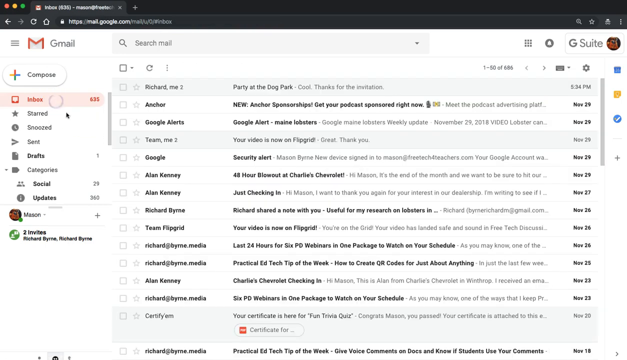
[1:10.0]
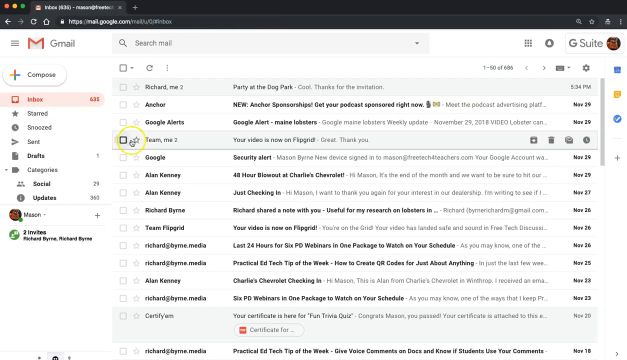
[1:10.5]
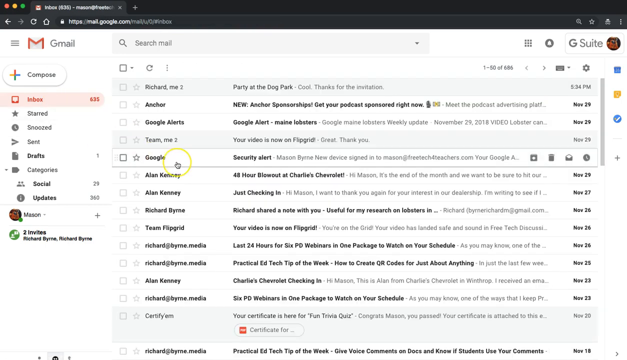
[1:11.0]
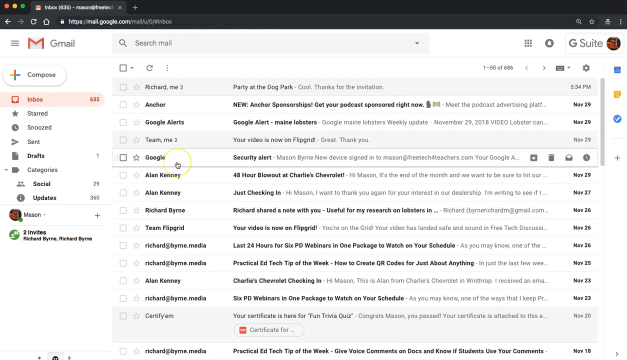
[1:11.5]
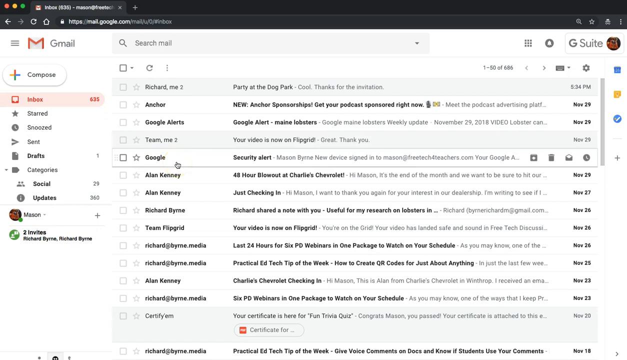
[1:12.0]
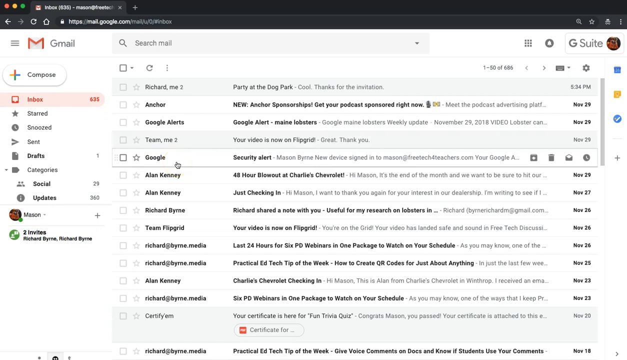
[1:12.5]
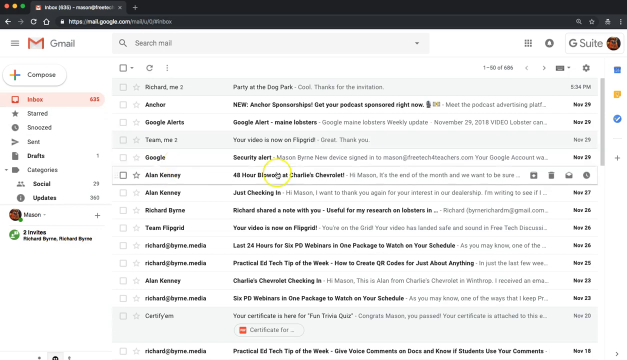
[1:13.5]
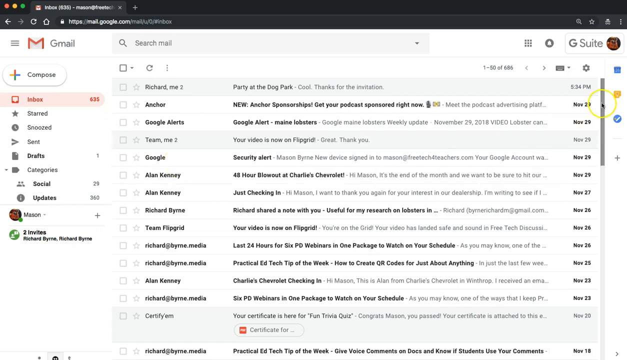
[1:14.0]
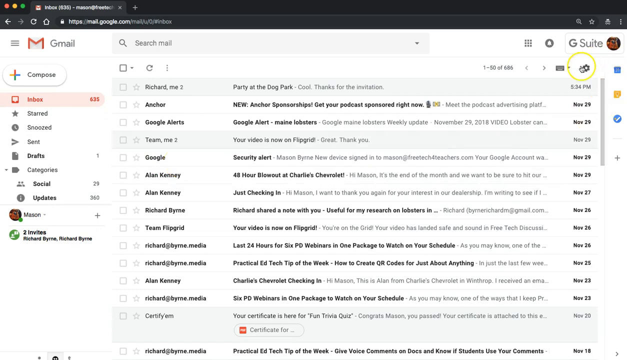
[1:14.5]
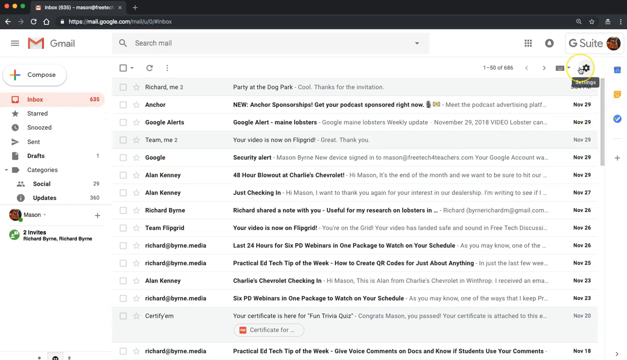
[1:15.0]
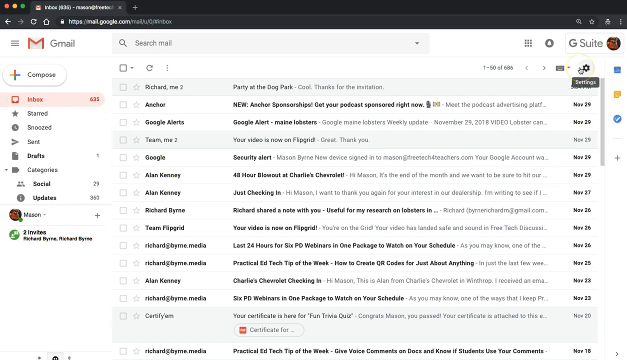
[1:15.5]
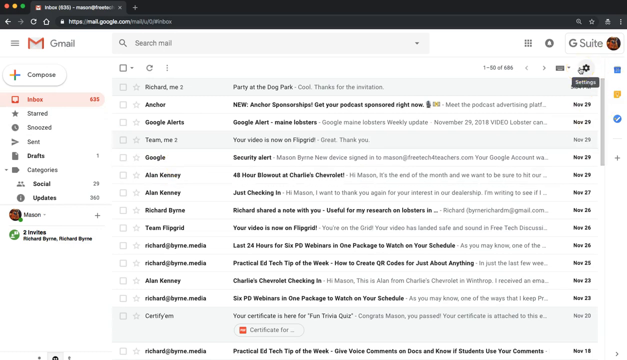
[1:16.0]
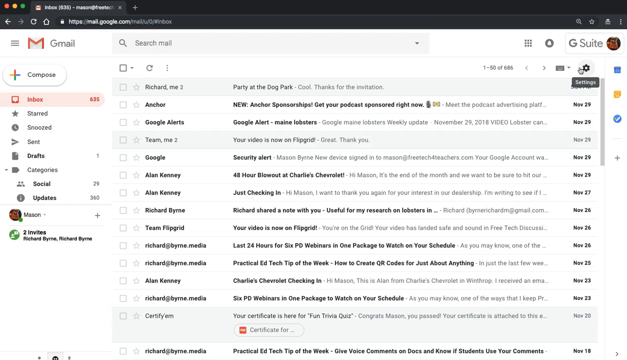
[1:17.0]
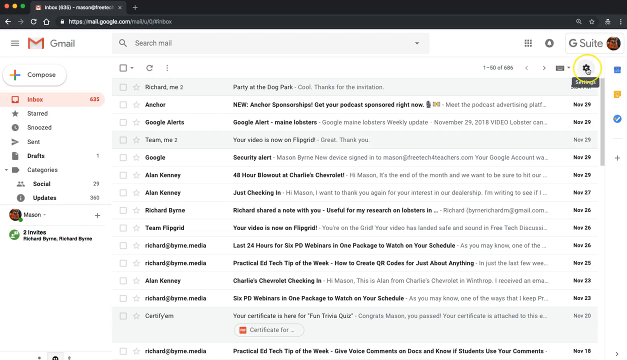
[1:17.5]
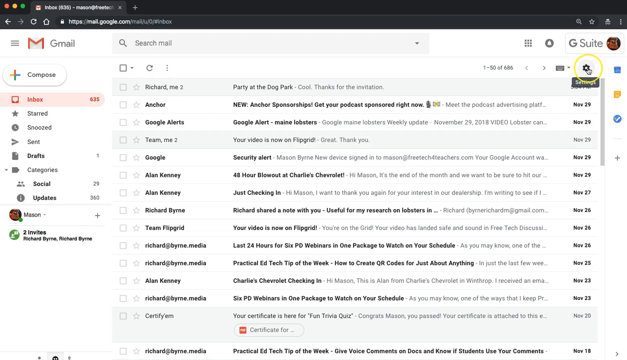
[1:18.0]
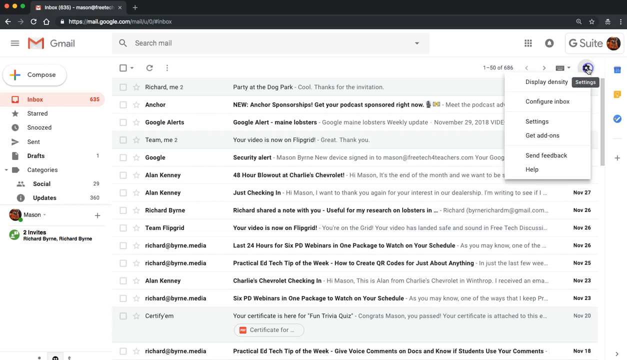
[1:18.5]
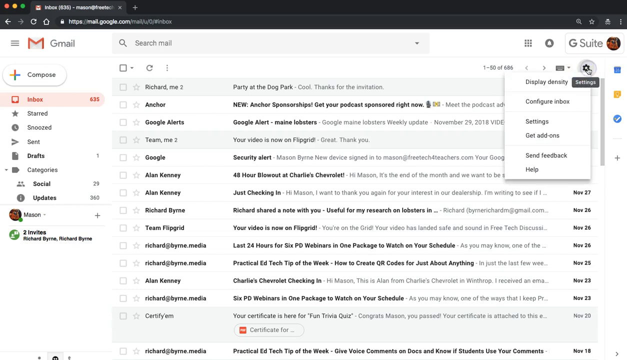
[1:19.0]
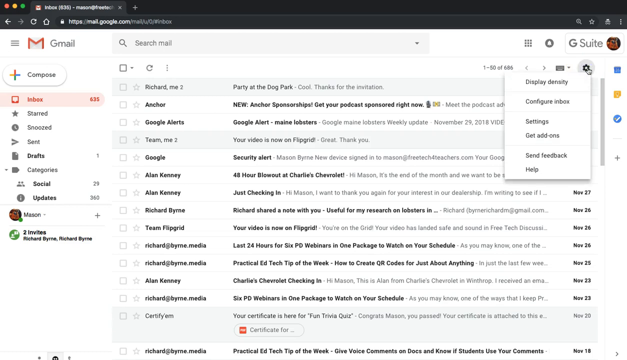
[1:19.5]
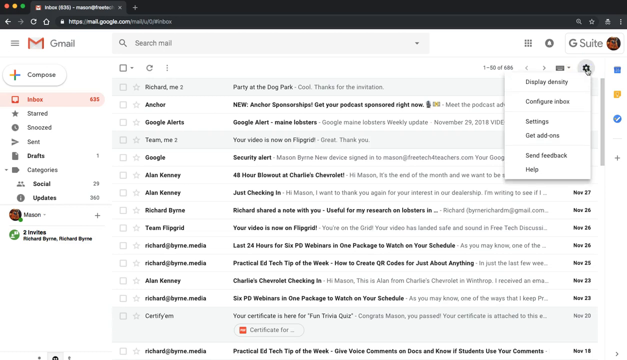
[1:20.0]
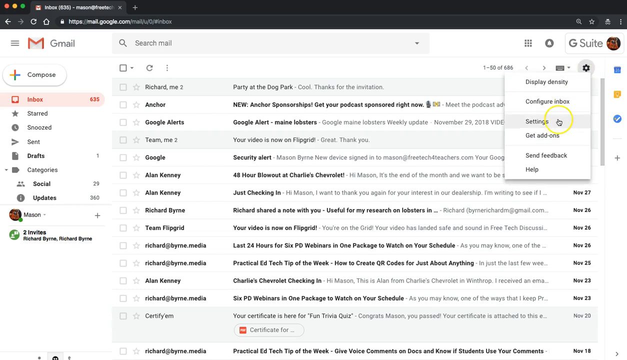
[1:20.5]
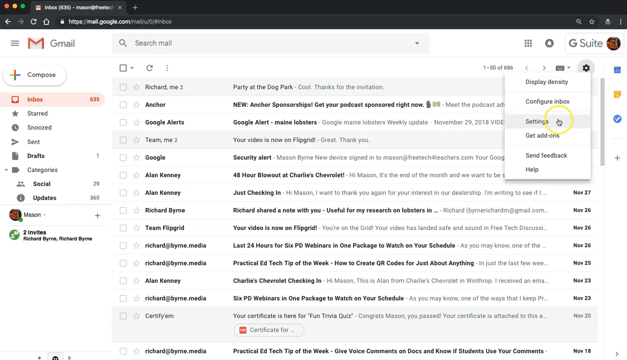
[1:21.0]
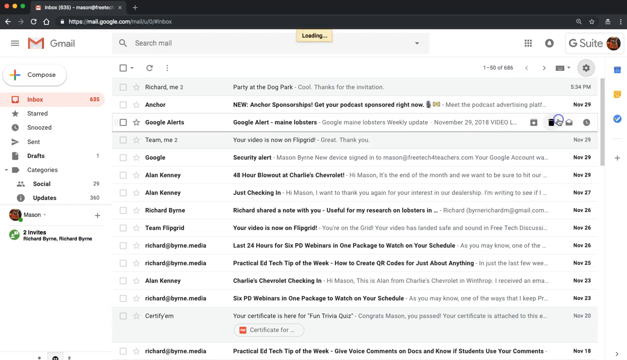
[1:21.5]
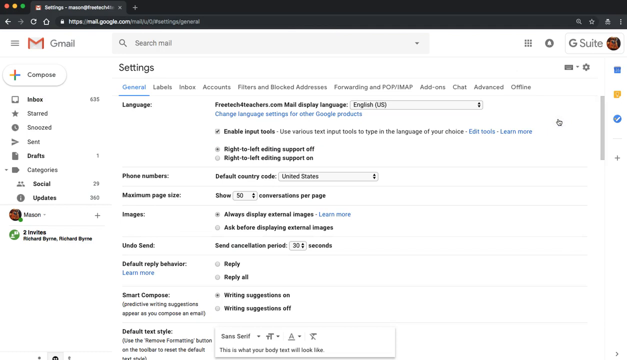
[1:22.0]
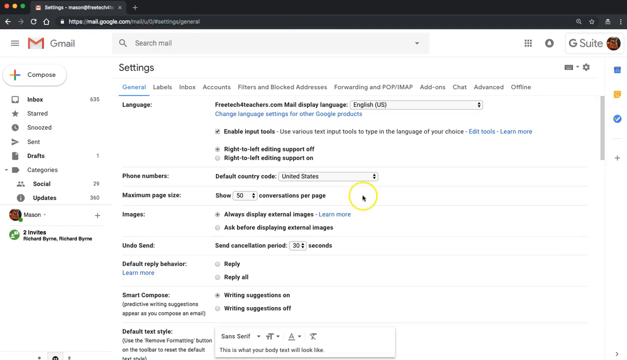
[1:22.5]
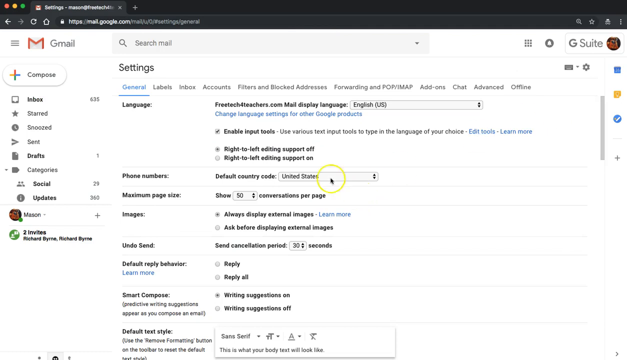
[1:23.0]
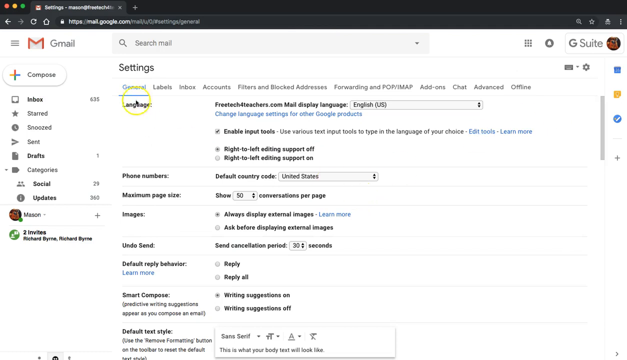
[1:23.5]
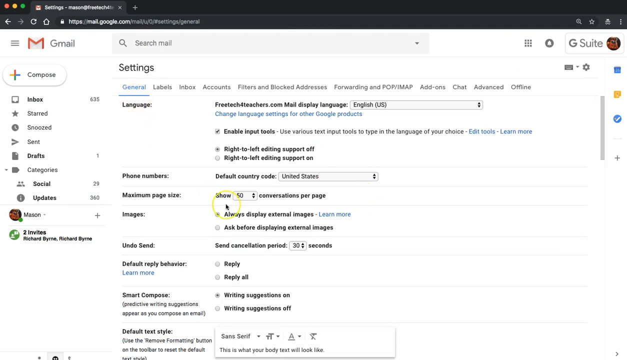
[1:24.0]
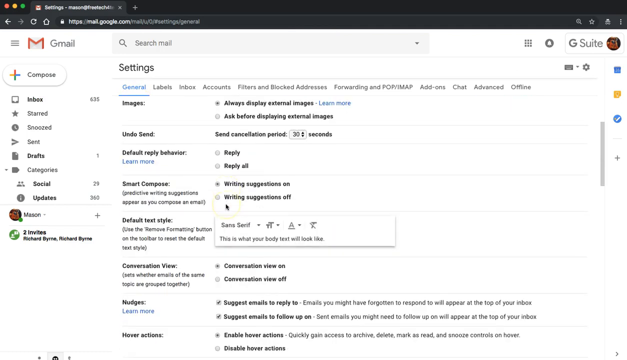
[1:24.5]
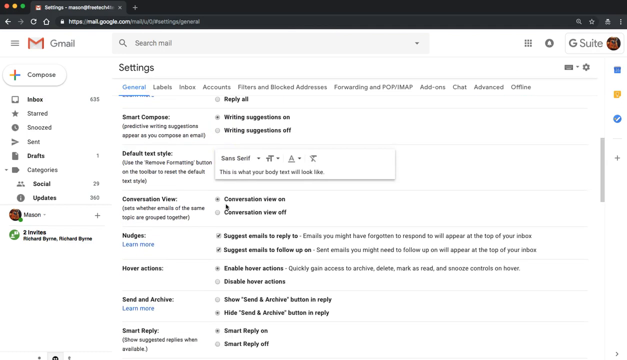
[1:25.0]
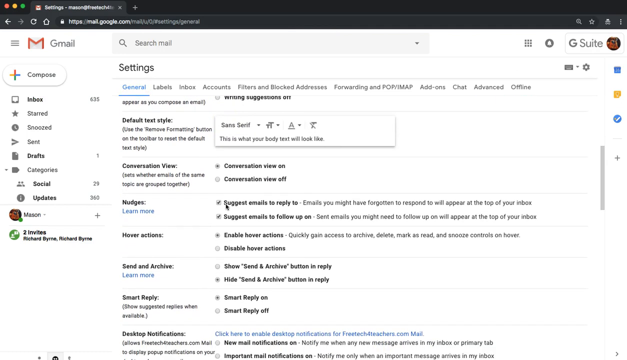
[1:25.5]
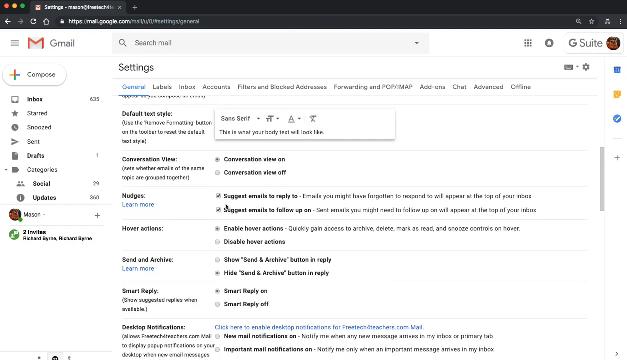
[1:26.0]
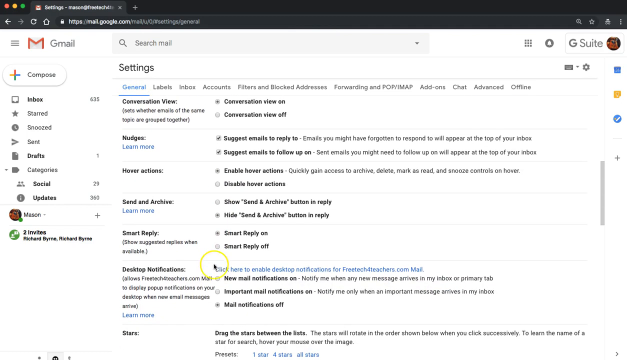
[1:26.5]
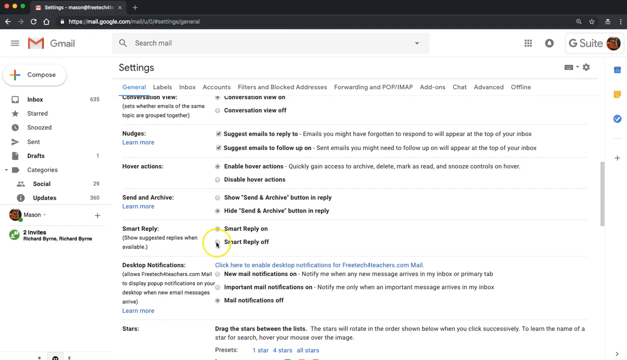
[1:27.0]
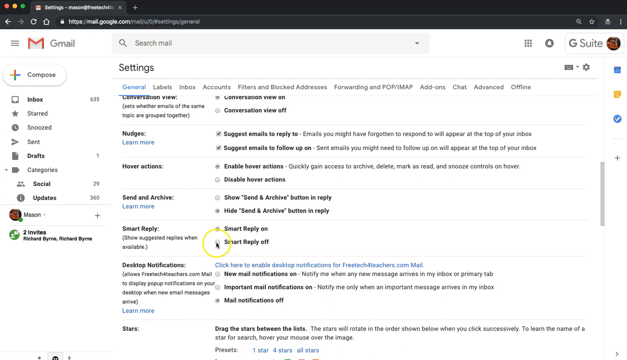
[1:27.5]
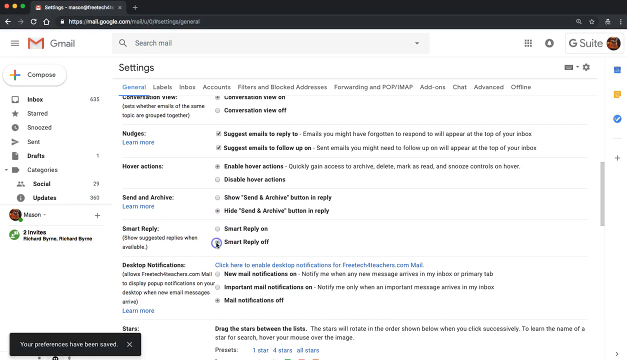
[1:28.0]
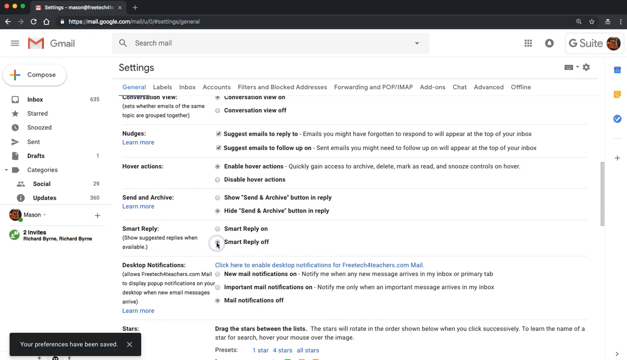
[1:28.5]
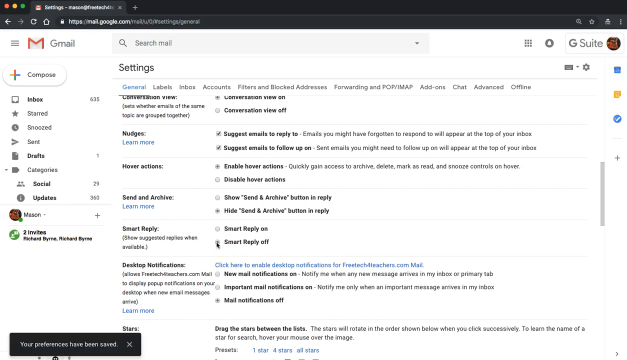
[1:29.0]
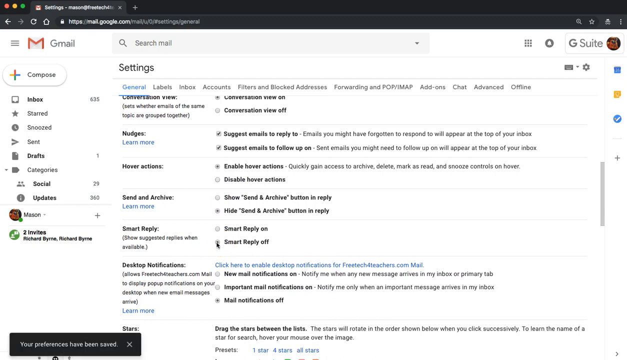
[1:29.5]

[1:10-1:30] A screen capture shows someone checking the emails in their Gmail inbox. Two emails have been clicked before and are not bold. The person scrolls down the email list and hovers the mouse over an email sent from Google. They then move over to the Settings tab for the application, click it, and go down to Settings again. They scroll down the page and click on Smart Reply; there are two options, and they click the radio button to turn Smart Reply off. The background is white, and Inbox is highlighted in pink with red font. There is also yellow on the screen, and the cursor has a yellow ring around it.